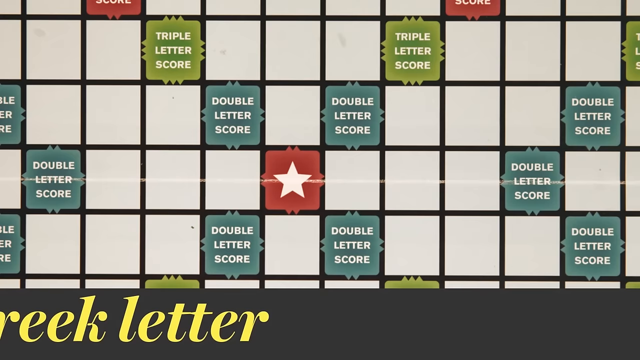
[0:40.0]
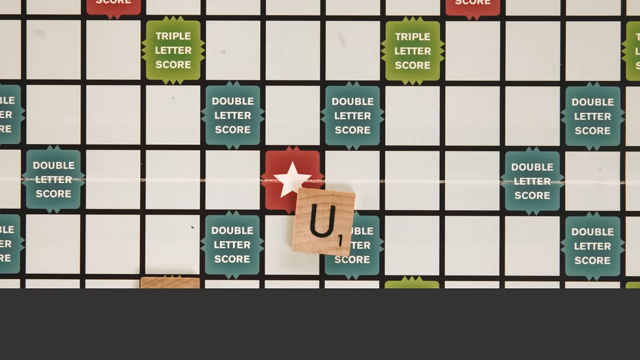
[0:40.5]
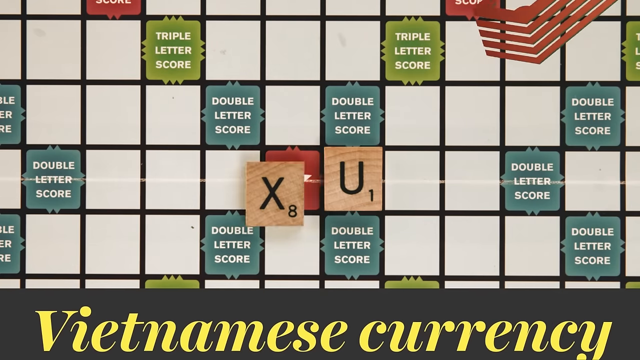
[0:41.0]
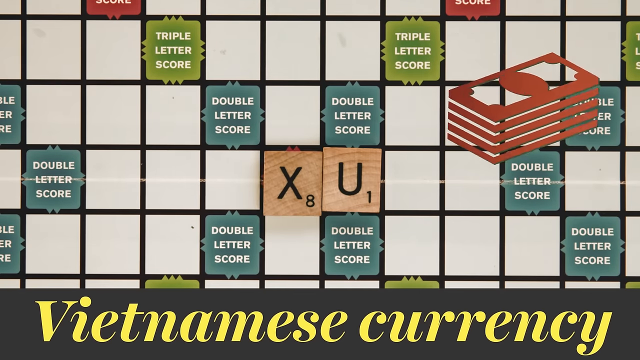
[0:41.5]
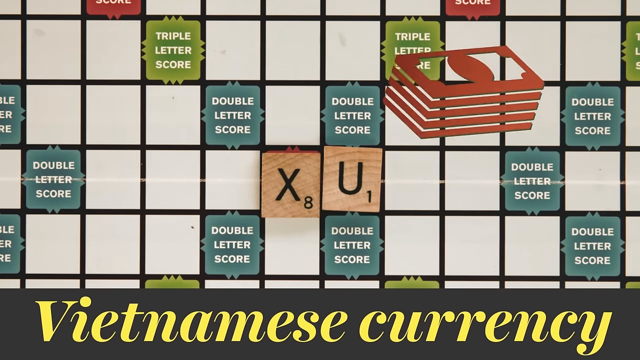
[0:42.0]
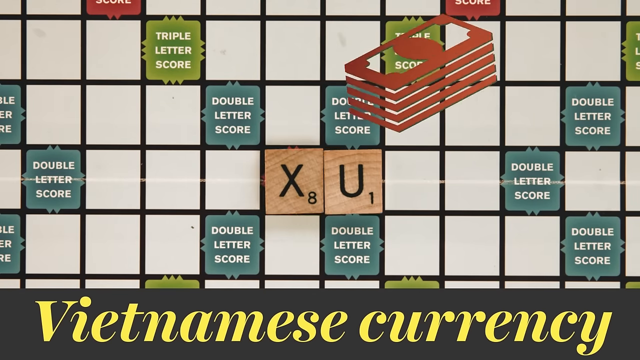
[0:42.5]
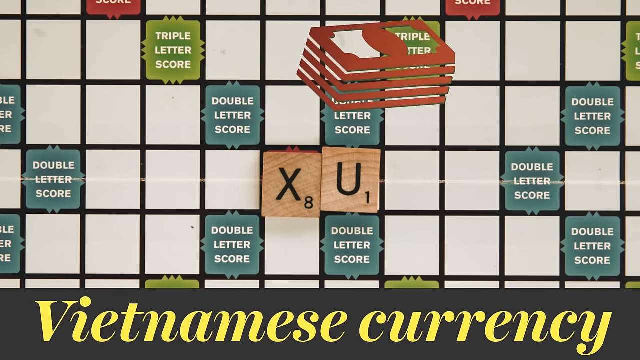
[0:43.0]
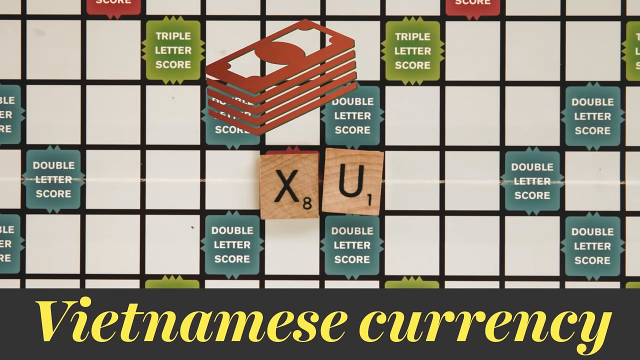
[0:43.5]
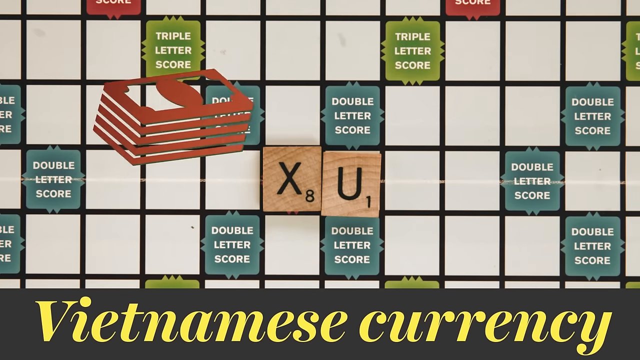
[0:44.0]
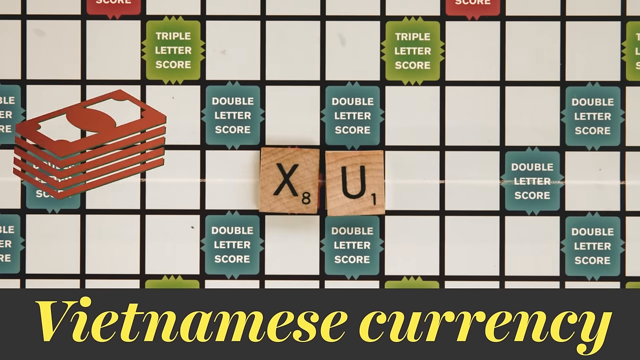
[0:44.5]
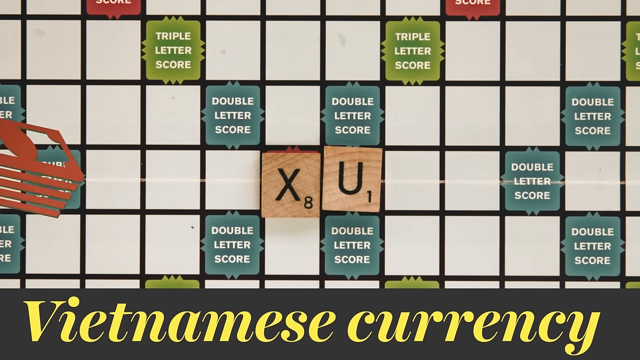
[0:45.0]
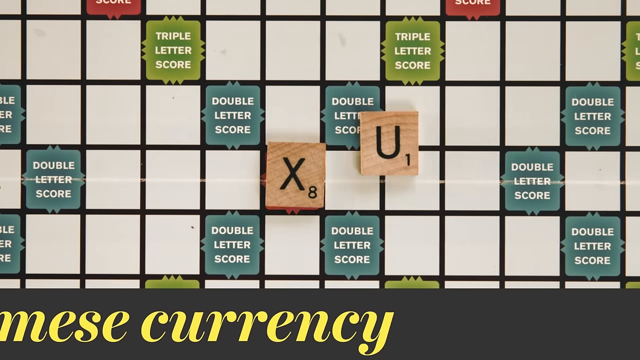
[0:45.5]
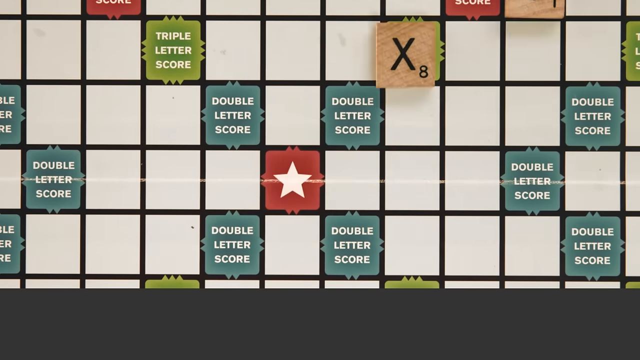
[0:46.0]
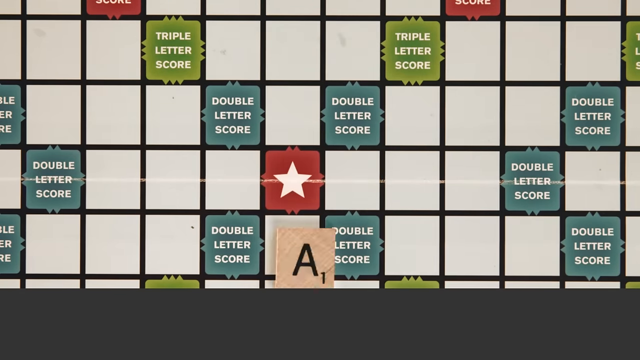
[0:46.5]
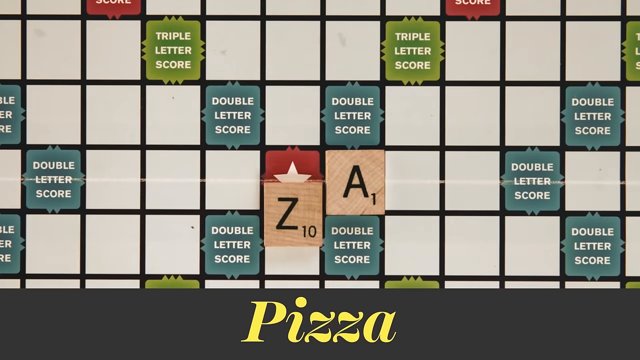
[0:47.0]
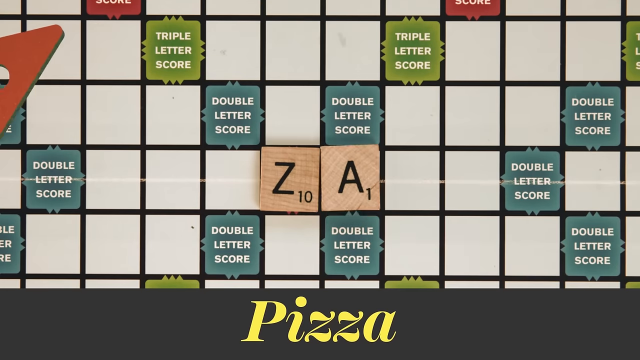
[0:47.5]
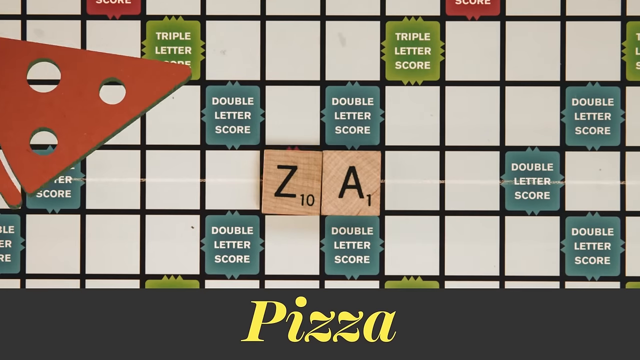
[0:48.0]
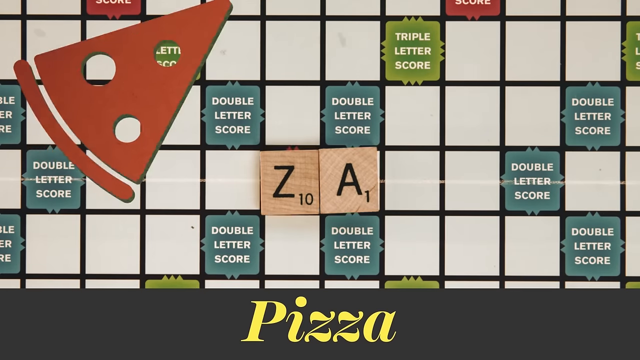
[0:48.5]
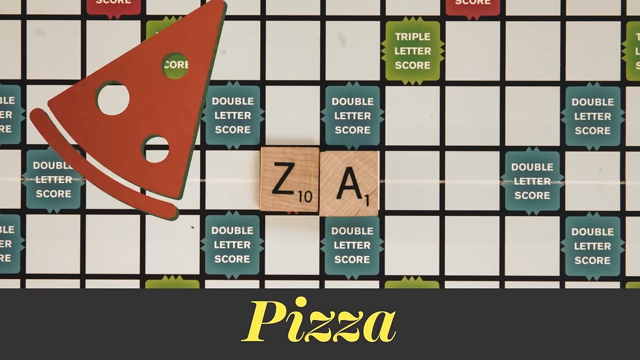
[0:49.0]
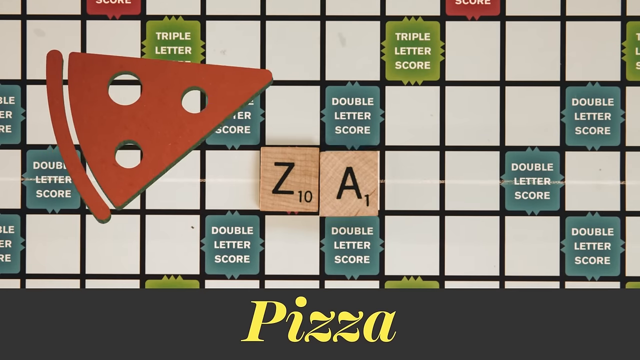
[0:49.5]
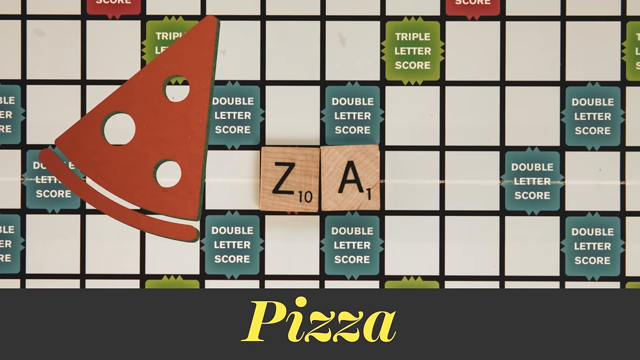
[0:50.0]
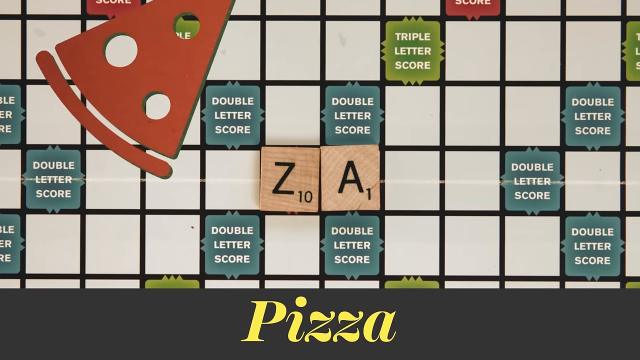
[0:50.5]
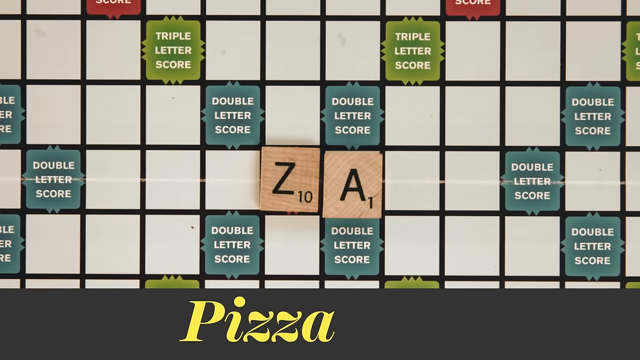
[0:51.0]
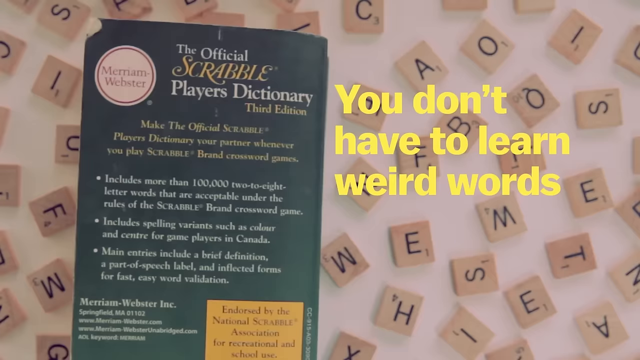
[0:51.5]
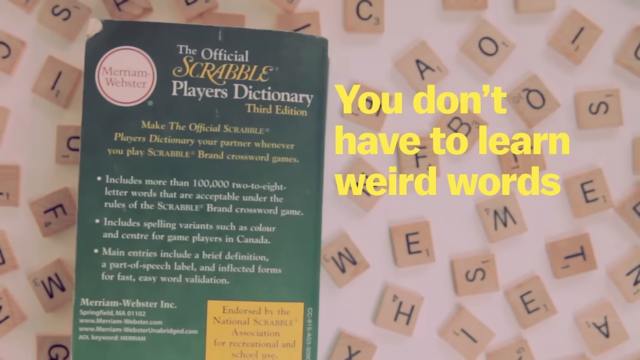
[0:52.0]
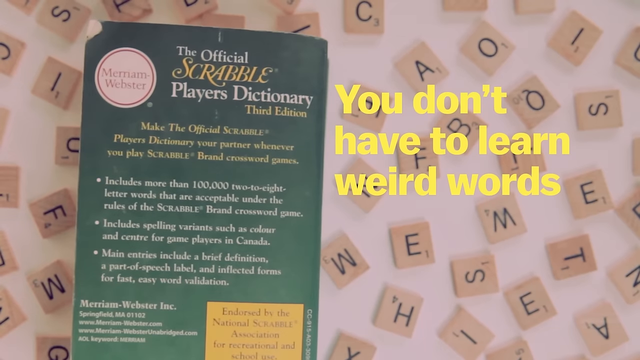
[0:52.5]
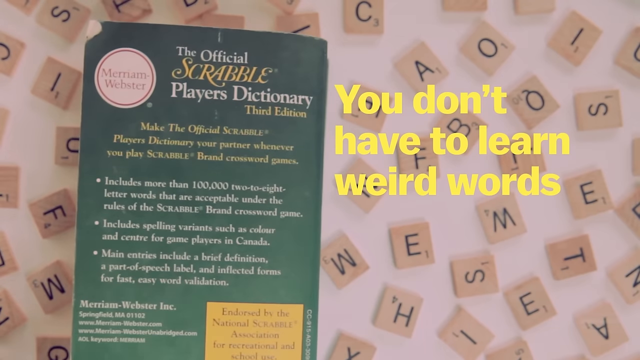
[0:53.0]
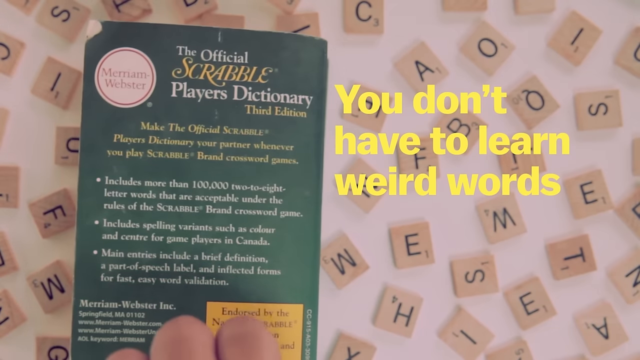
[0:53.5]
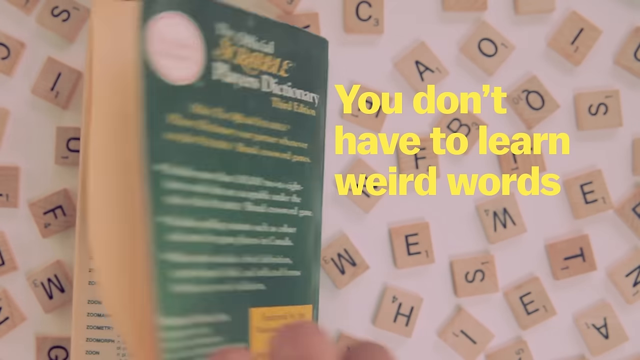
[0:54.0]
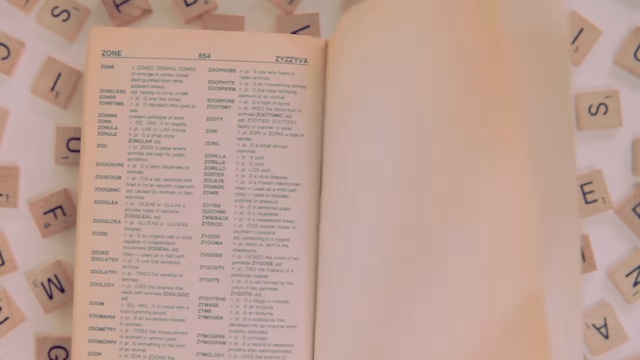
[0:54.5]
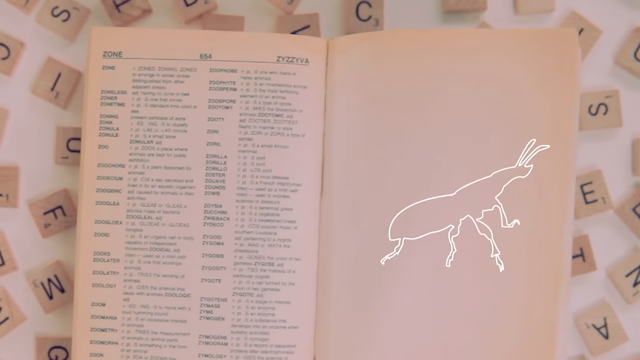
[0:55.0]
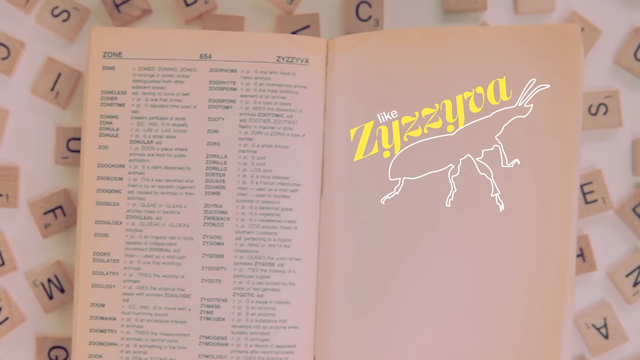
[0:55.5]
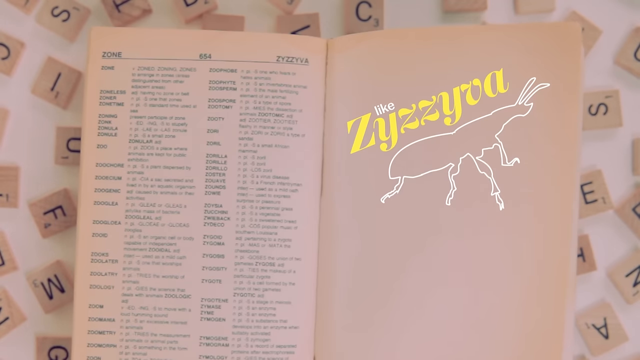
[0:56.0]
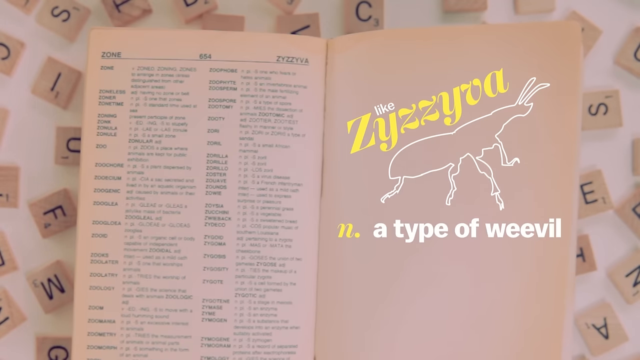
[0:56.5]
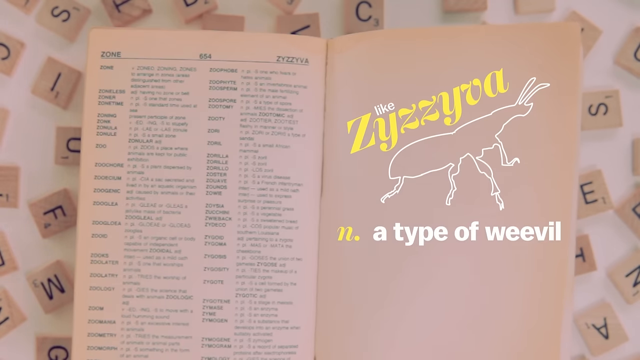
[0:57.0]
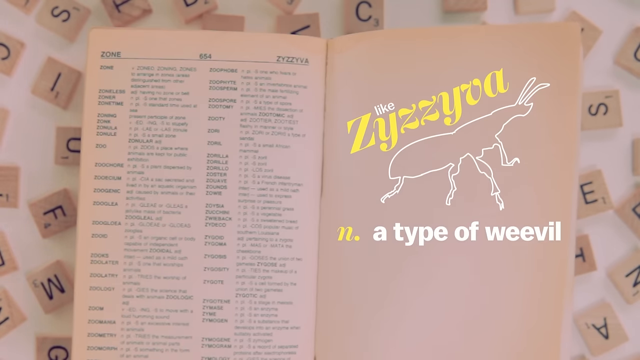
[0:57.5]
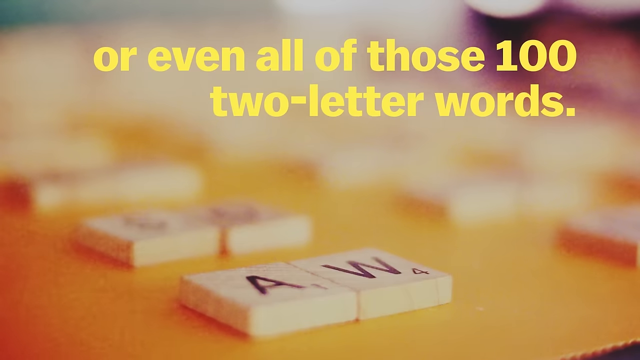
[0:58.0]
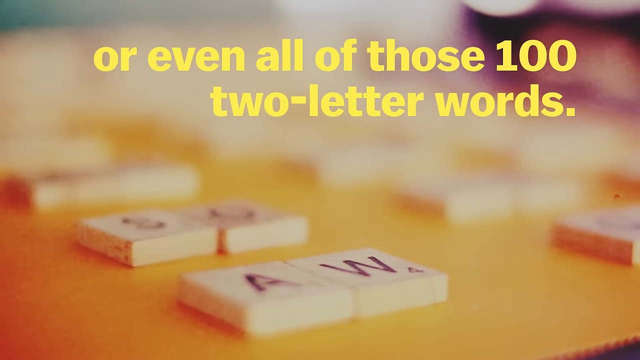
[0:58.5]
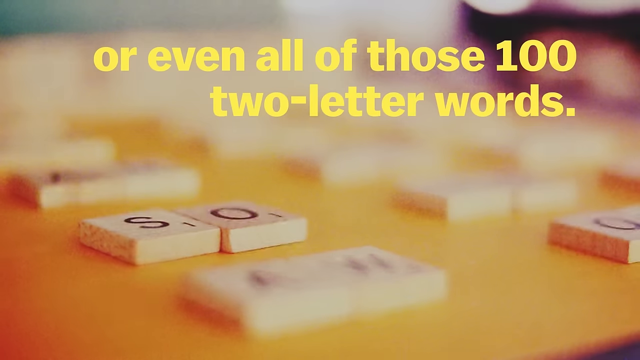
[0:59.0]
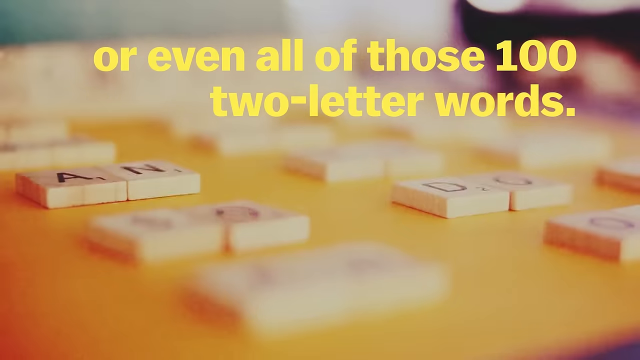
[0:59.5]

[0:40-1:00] The video continues with XU, meaning "Vietnamese currency," then slowly moves on to XA, with yellow text at the bottom explaining it is a short word for pizza. It cuts to the Official Scrabble Player's Dictionary 3rd Edition from Merriam-Webster, with text including "How to make the Official Scrabble Player's Dictionary your partner whenever you play Scrabble" and a statement that it includes more than 100,000 2-8 letter words acceptable under the rules of Scrabble brand crossword game, including spelling variants such as colour and centre for game players in Canada. Yellow text on the right of the screen says "you don't have to learn weird words." The book flips open to an illustration of what appears to be a bug, with text along the lines of "ZYZZYVA, a type of weevil." The video then switches to text saying "or even all of those 100 two-letter words" with some Scrabble tiles on what looks like a wooden desk.